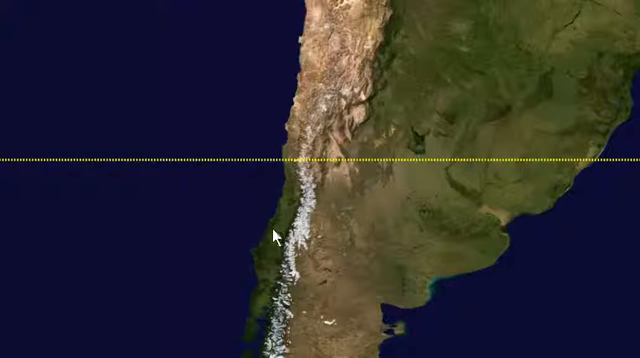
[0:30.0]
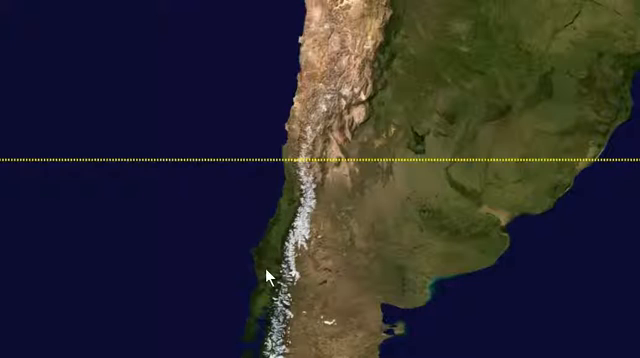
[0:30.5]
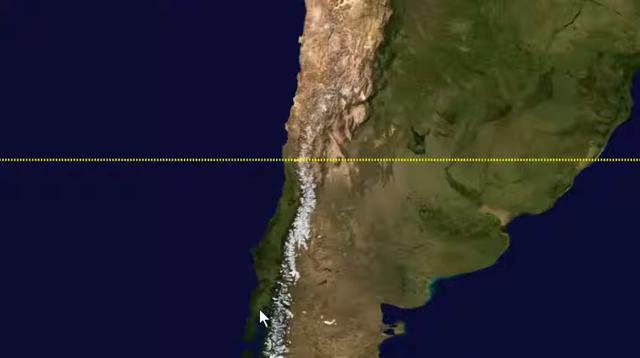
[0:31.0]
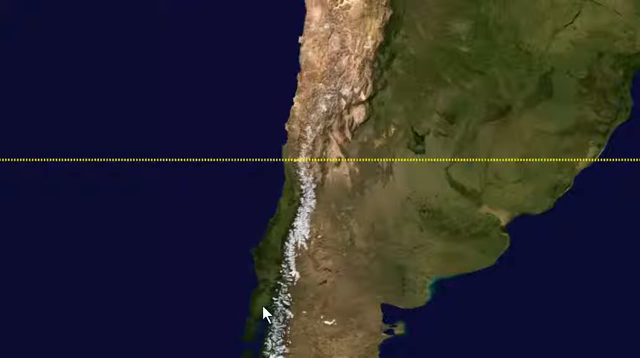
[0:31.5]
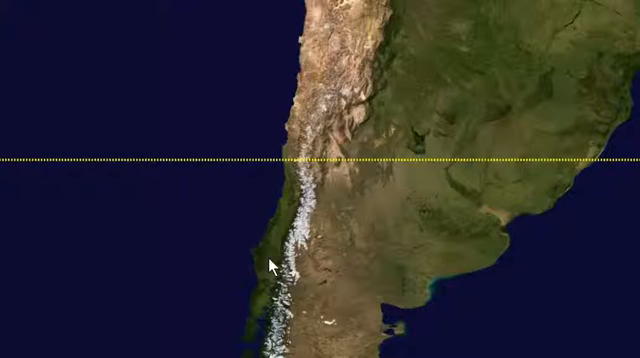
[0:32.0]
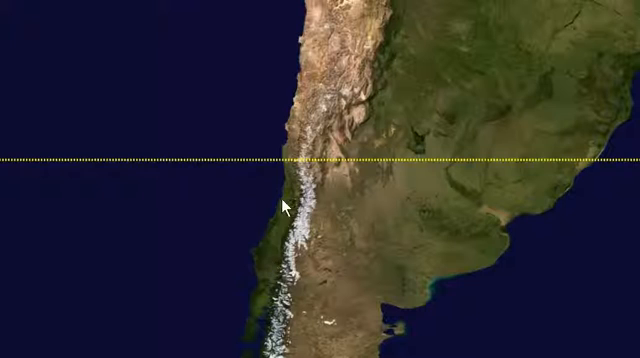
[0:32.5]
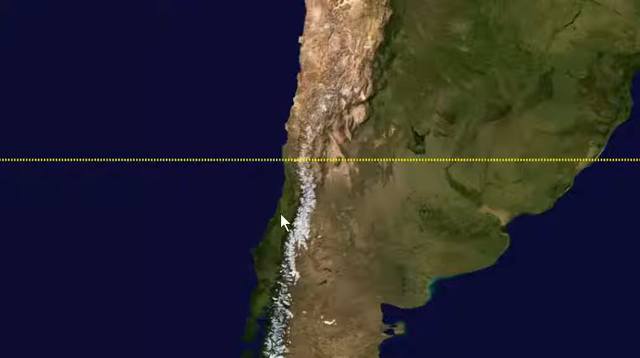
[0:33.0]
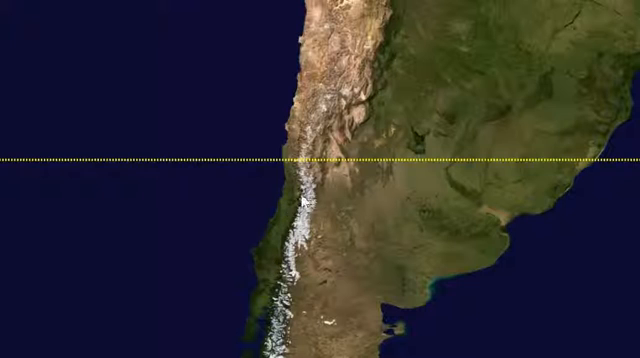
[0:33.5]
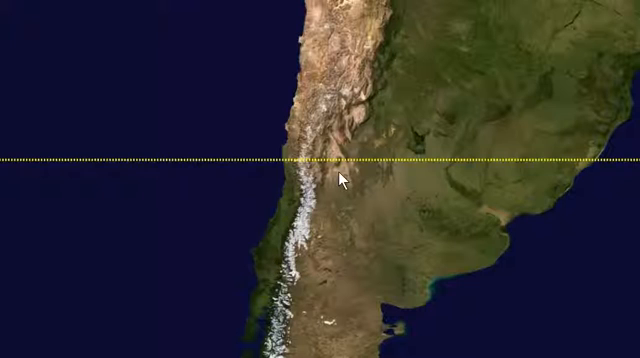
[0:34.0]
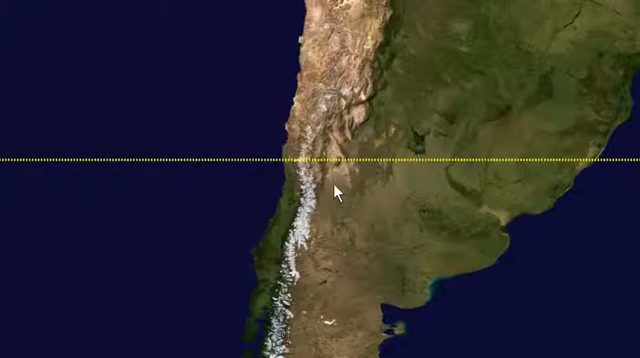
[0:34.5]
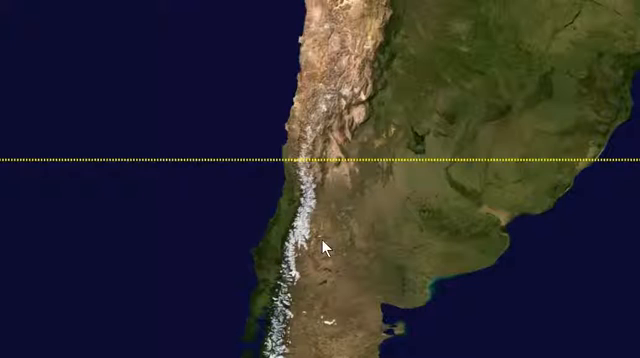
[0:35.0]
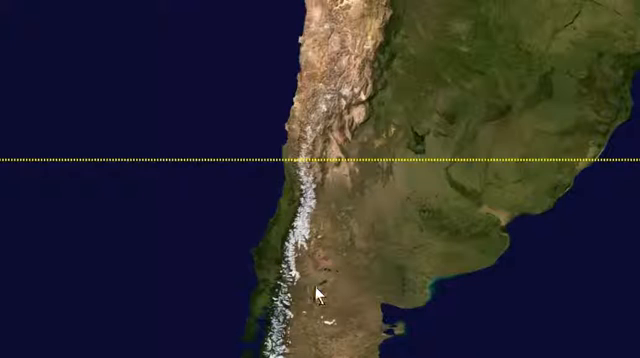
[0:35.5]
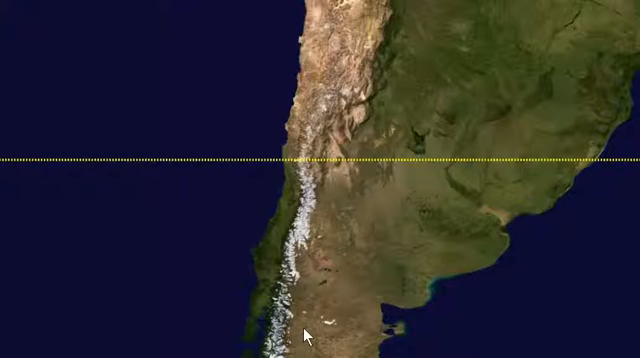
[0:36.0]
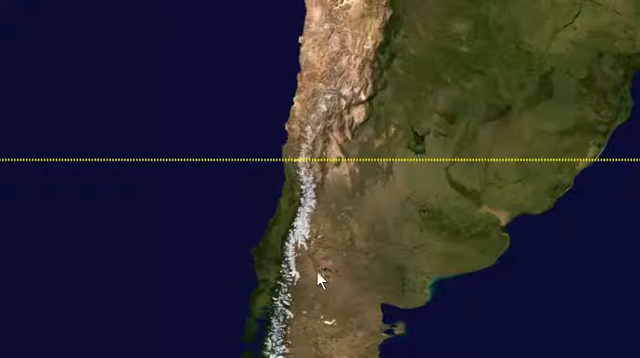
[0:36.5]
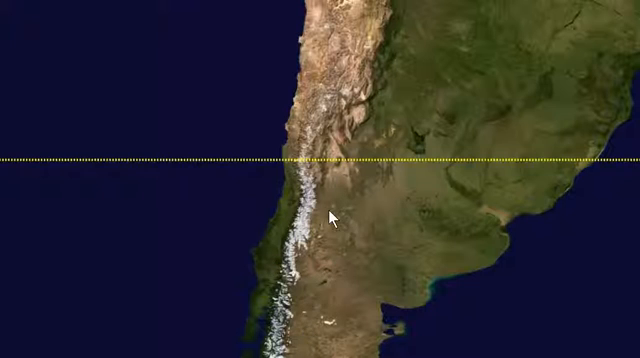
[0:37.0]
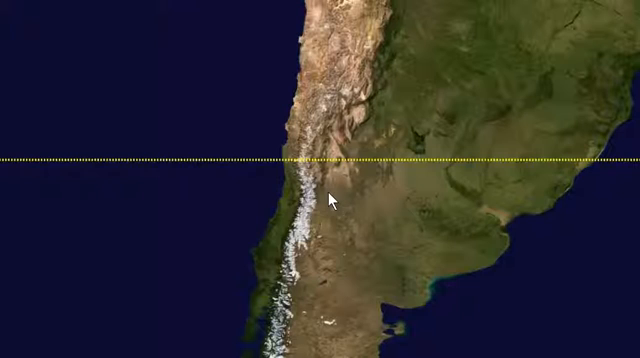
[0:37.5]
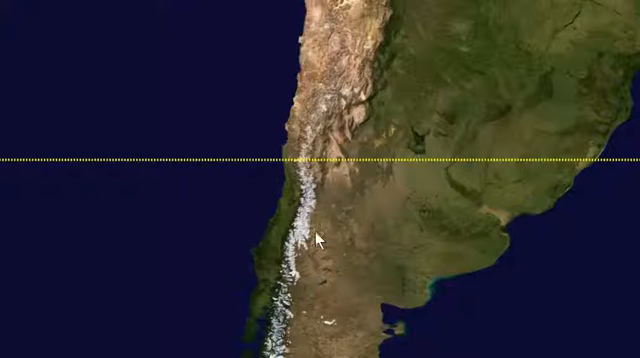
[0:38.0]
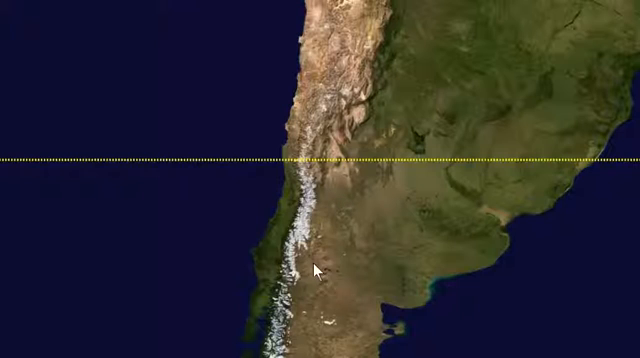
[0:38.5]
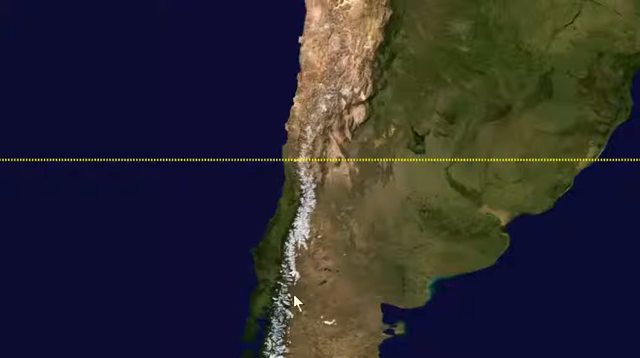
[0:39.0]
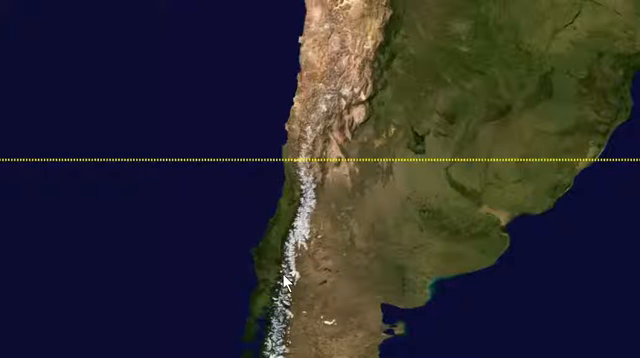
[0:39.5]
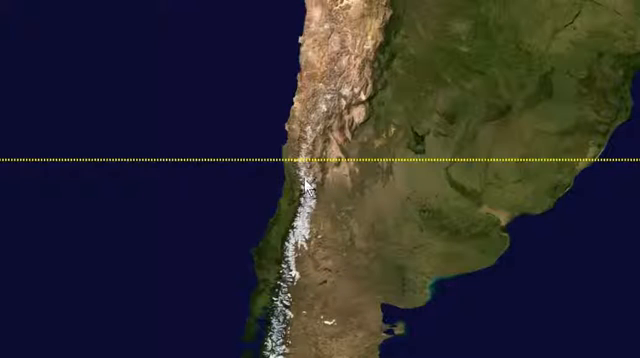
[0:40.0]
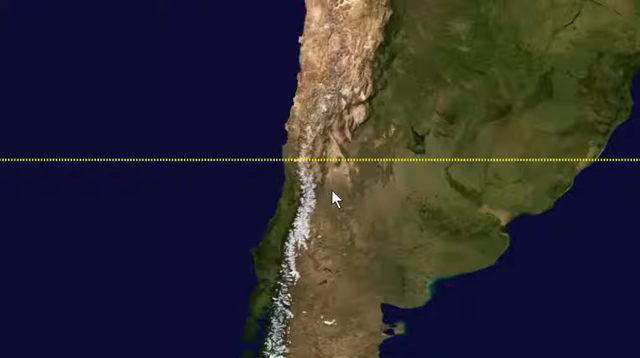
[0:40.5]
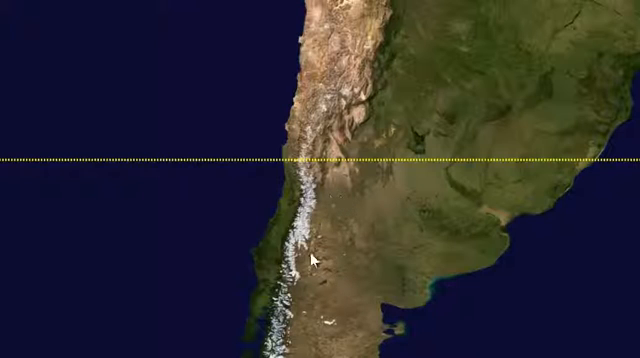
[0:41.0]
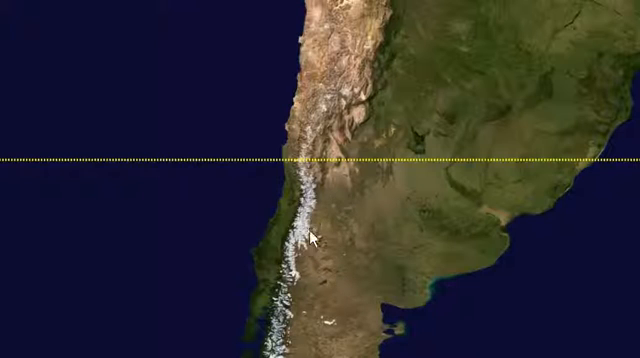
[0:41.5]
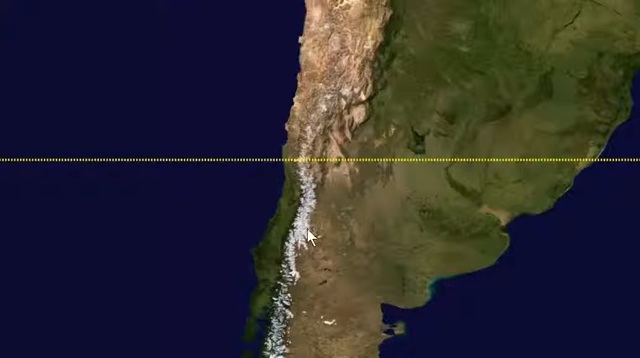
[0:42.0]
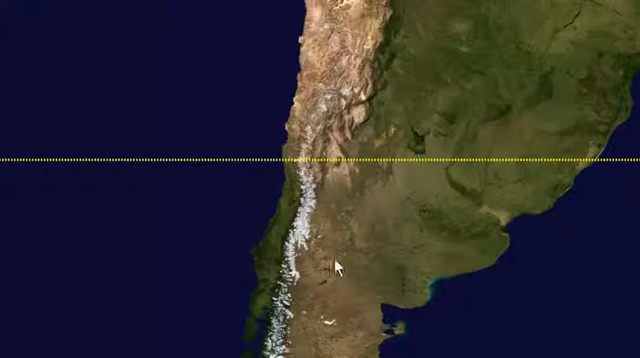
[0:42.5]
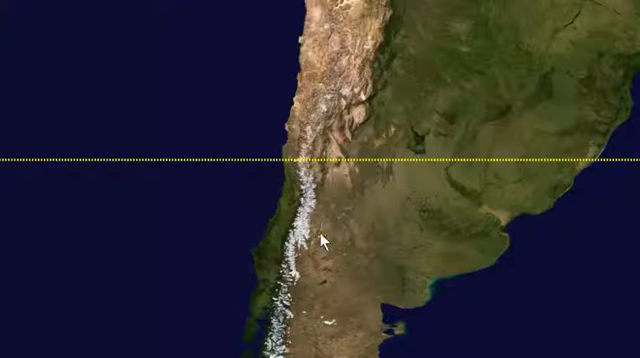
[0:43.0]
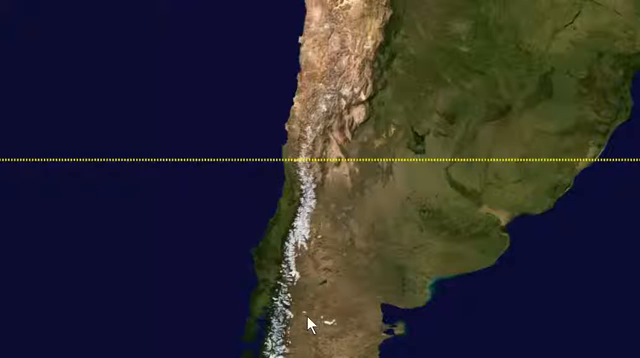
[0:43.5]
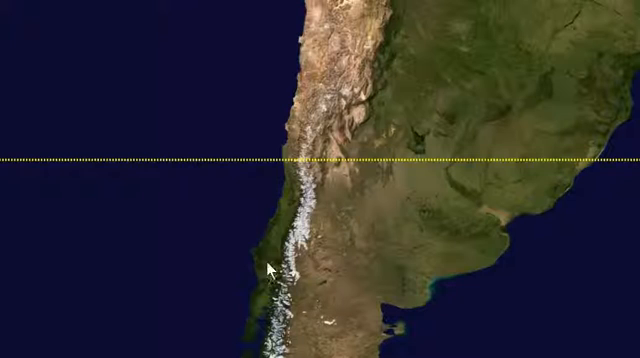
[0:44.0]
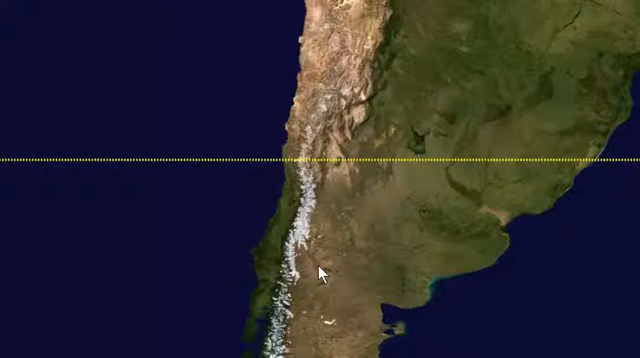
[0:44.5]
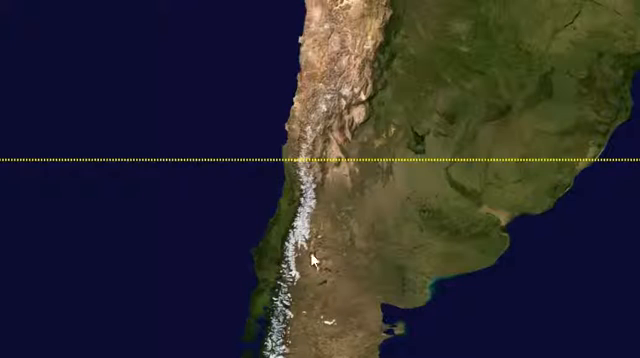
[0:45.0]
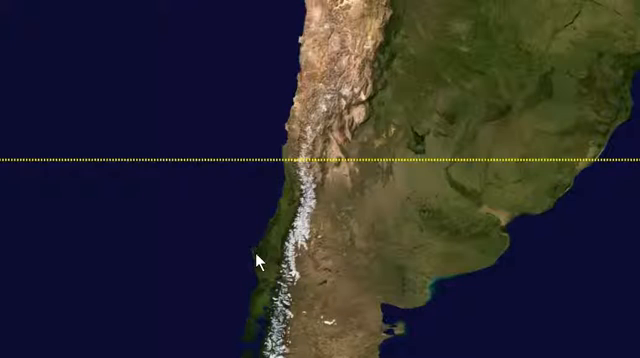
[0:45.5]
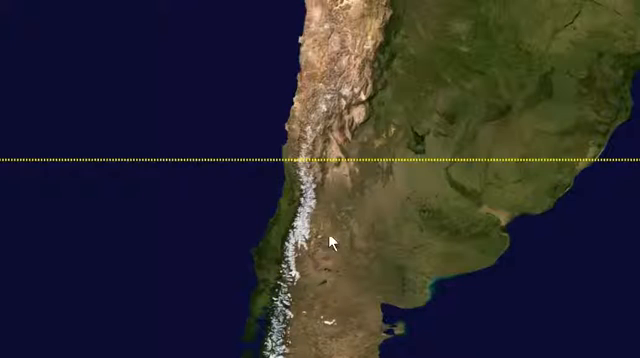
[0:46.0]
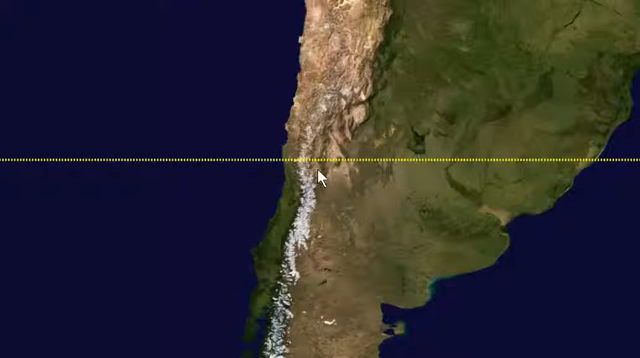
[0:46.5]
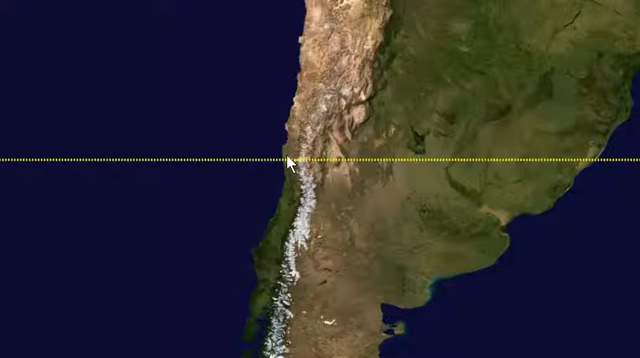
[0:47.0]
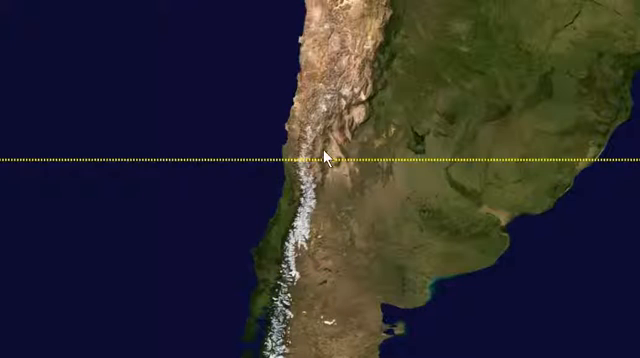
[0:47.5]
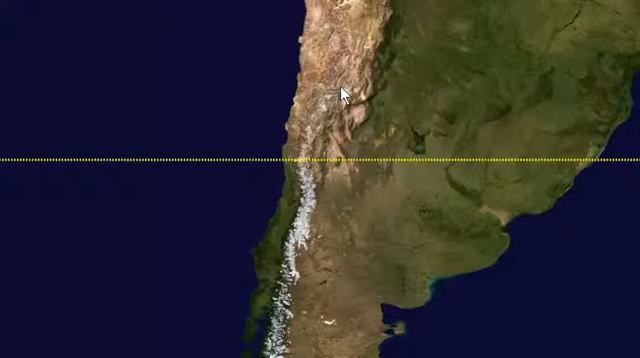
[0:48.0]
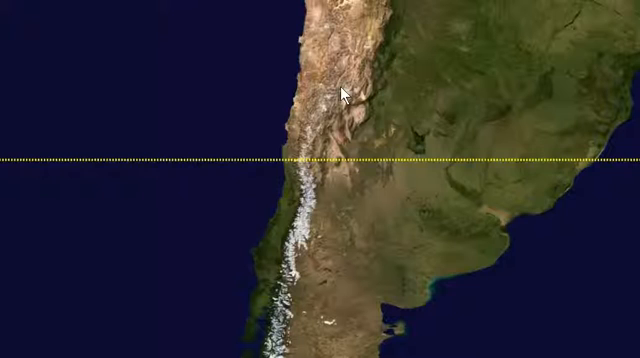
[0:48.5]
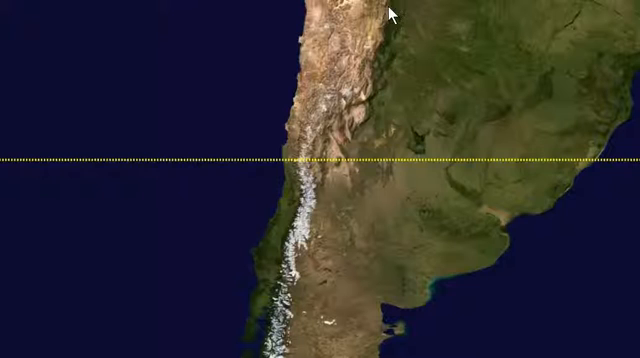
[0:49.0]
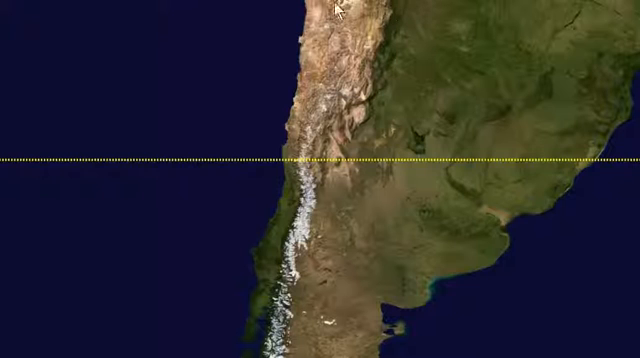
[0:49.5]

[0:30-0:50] The graphical map illustration is displayed on a dark background, with a yellow dotted line drawn horizontally along the middle of the map from left to right. A mouse cursor hovers downward over the landmass and then drifts upward again, staying below the yellow line. It moves onto the brown part of the map, which looks like it might be rocky terrain. The cursor then scrolls vertically up and down over some whitish parts of the map and circles around the brown parts to the left and right of the whitish parts. It continues the circling movement, then moves from left to right while still staying below the map. Finally, the cursor crosses over to the north above the map and scans over what looks like rocky terrain, judging by the brown color of the landmass there.